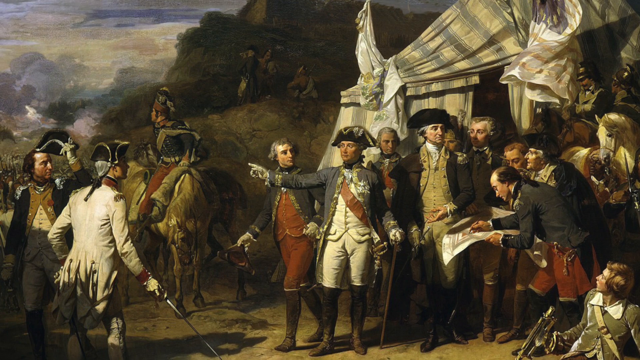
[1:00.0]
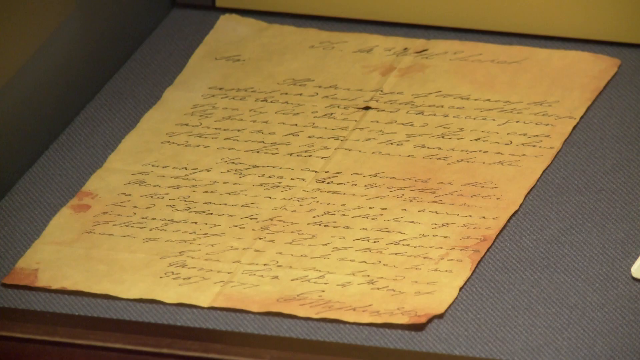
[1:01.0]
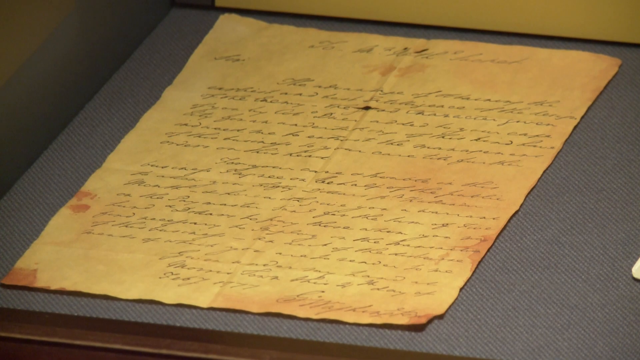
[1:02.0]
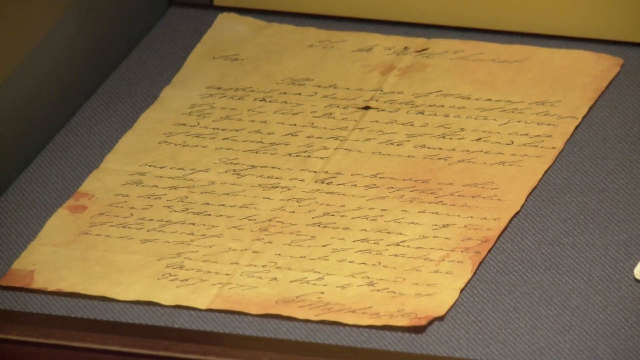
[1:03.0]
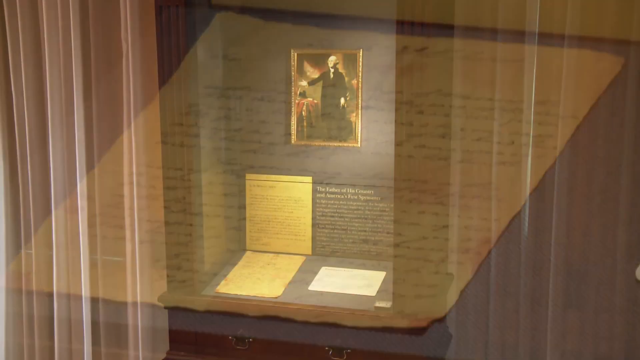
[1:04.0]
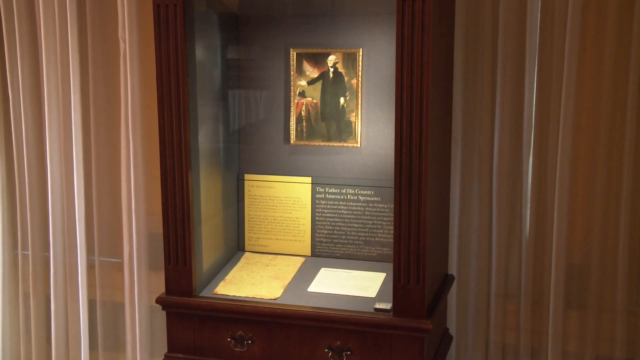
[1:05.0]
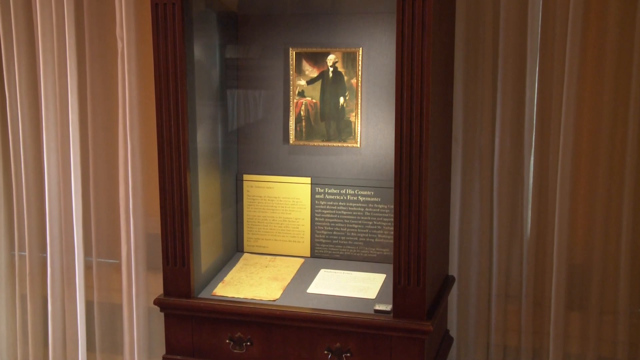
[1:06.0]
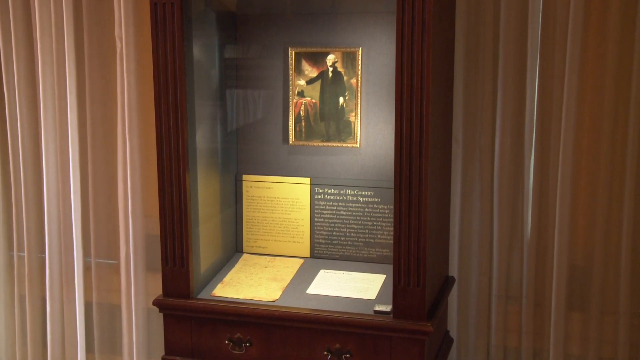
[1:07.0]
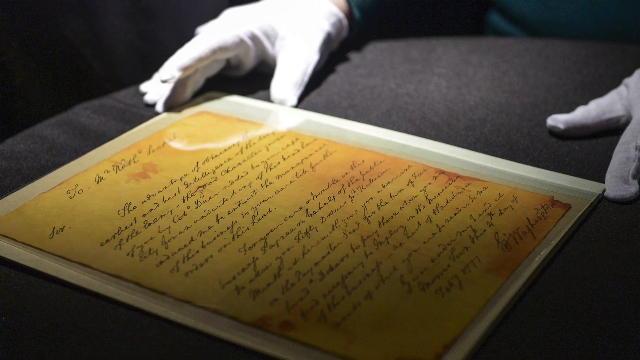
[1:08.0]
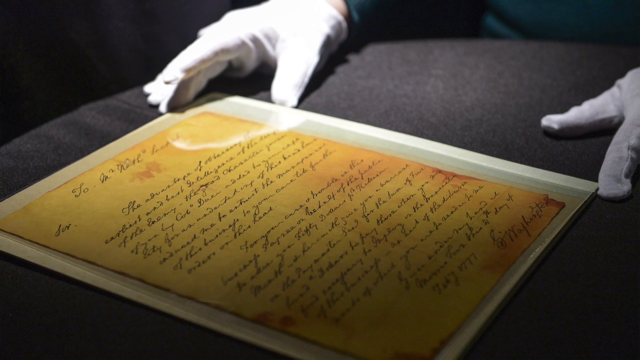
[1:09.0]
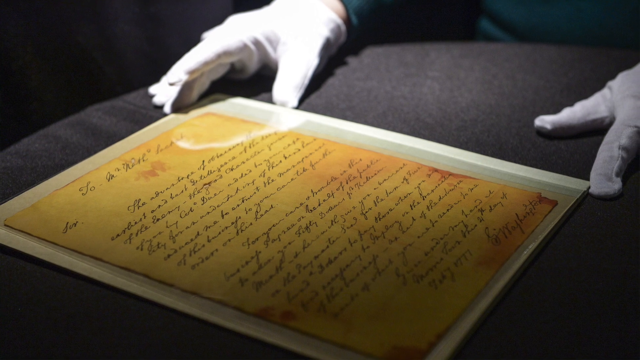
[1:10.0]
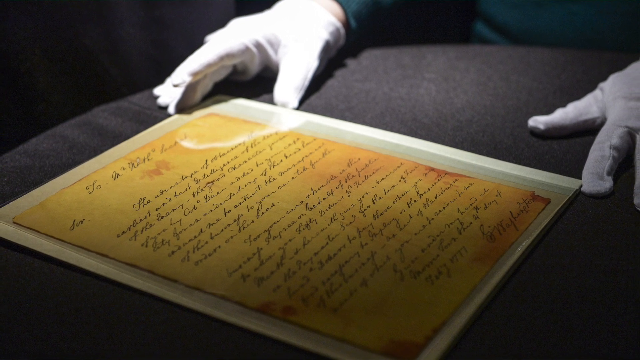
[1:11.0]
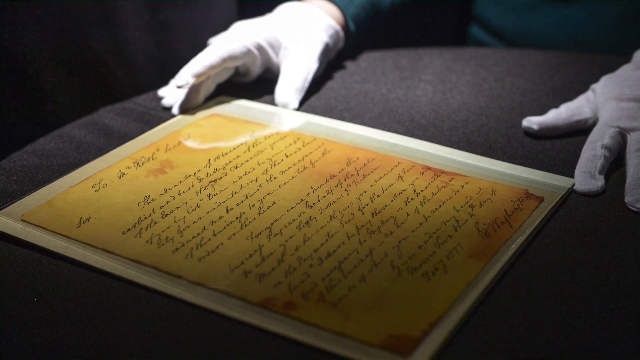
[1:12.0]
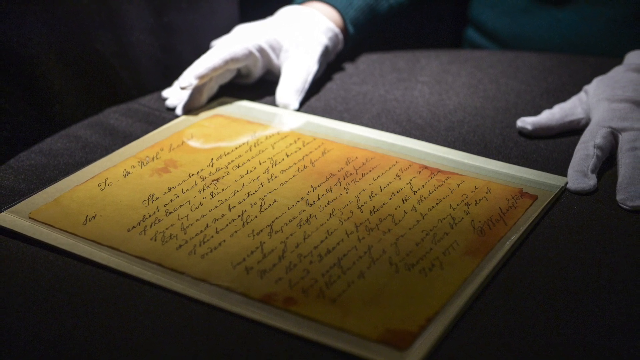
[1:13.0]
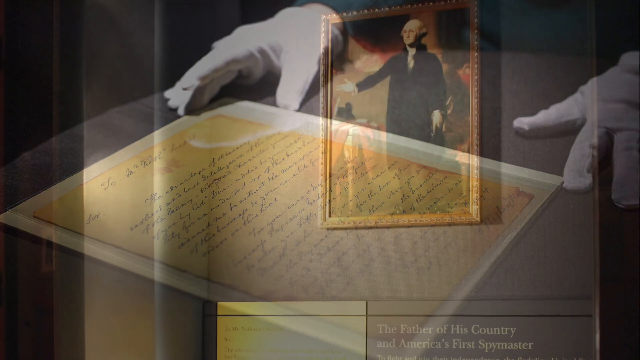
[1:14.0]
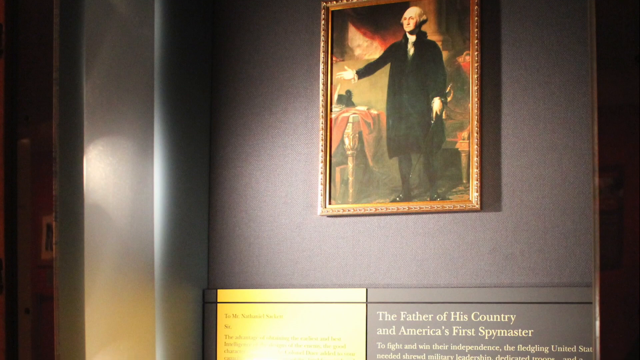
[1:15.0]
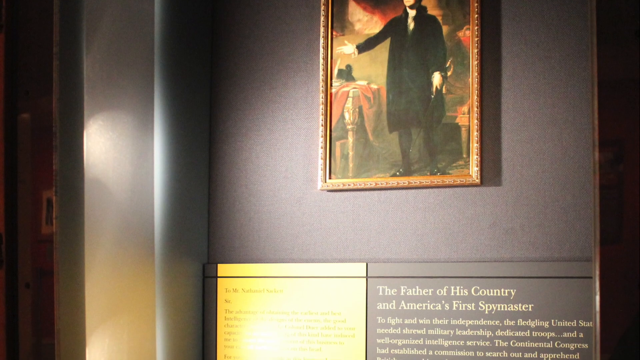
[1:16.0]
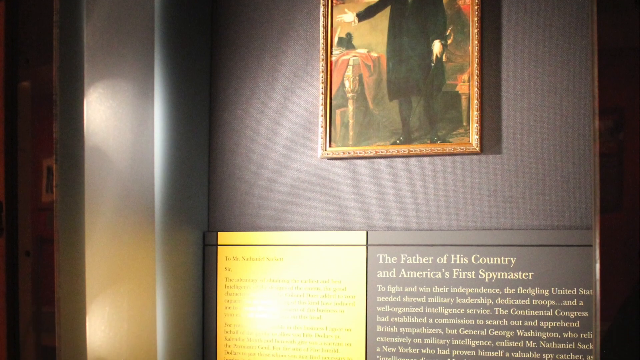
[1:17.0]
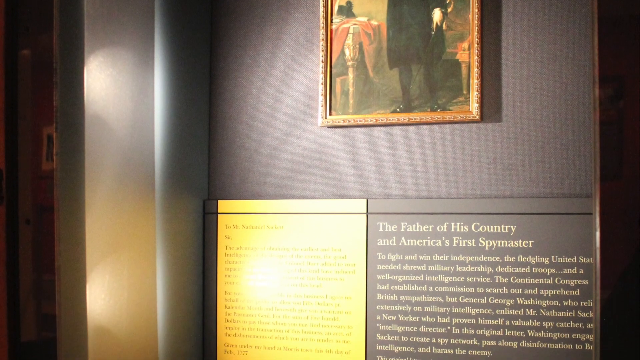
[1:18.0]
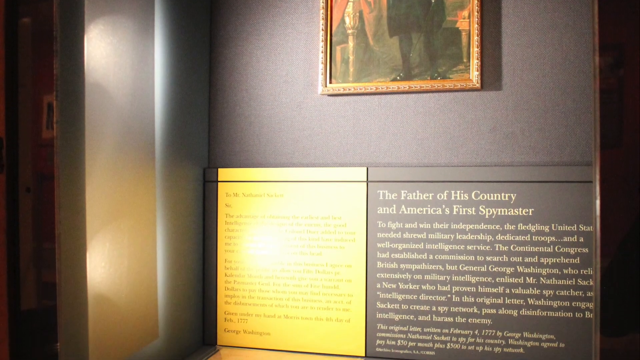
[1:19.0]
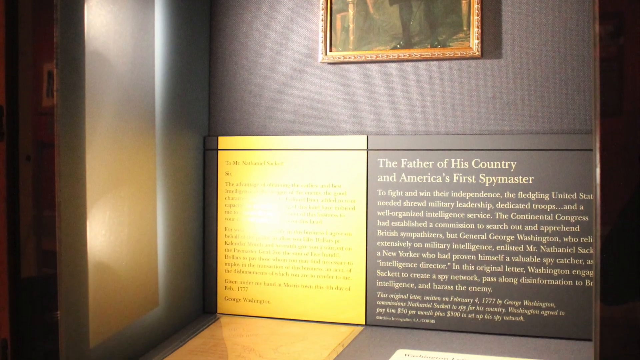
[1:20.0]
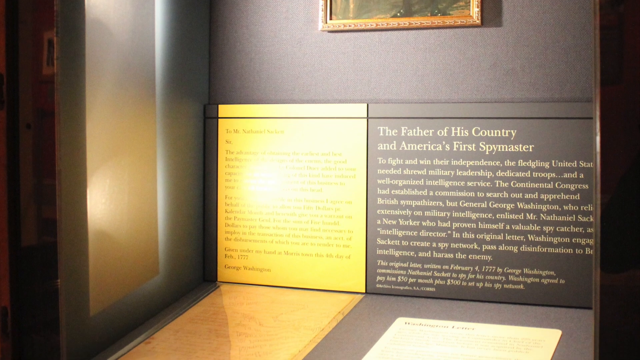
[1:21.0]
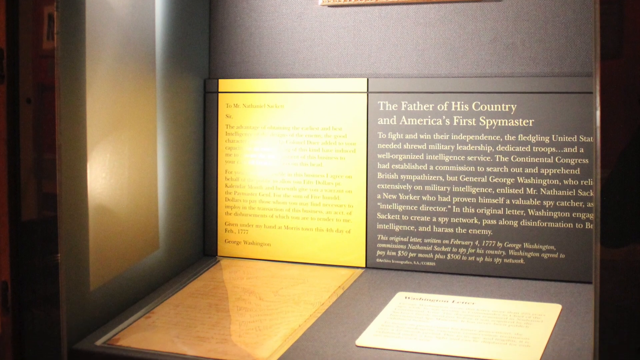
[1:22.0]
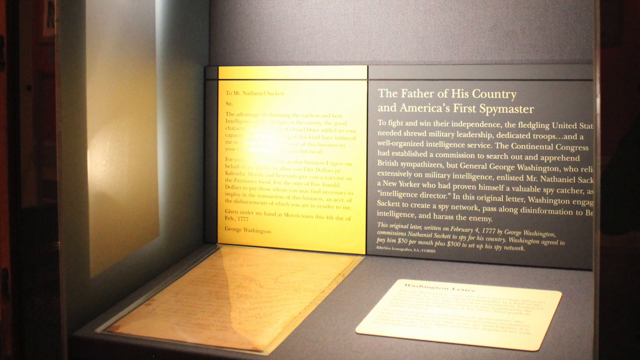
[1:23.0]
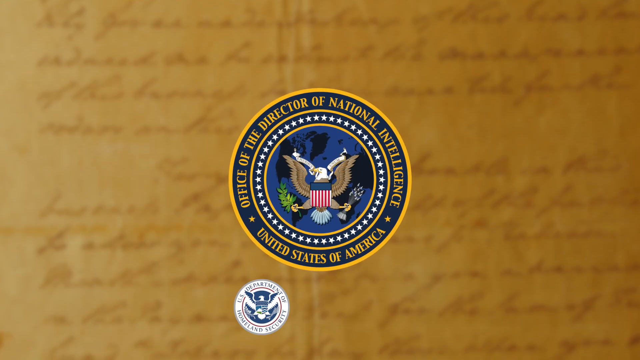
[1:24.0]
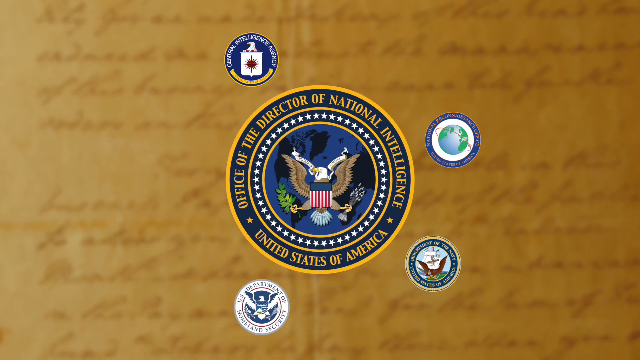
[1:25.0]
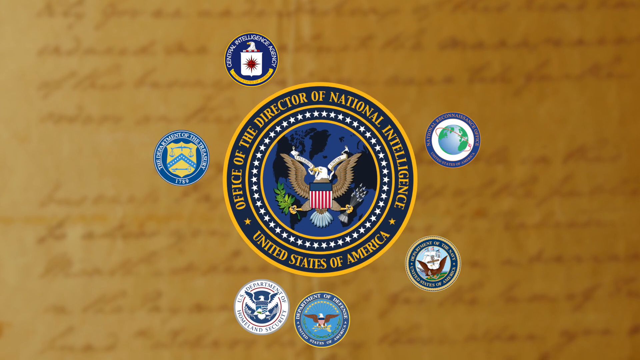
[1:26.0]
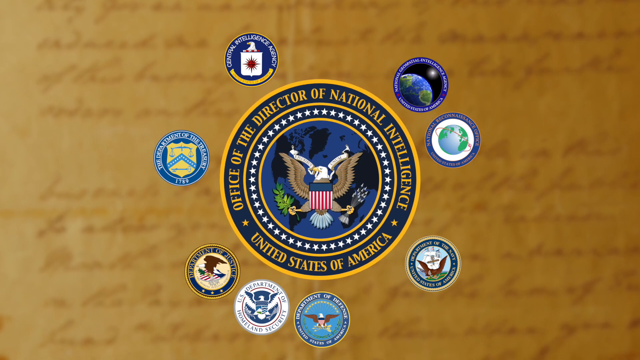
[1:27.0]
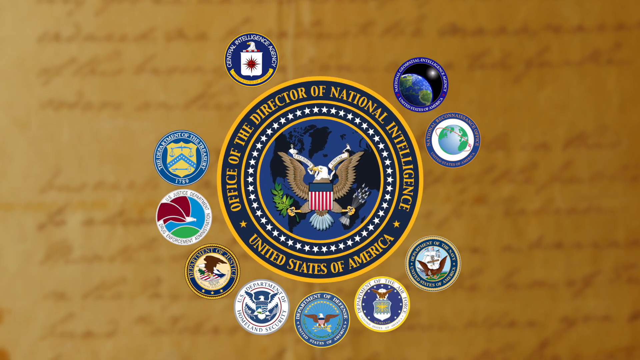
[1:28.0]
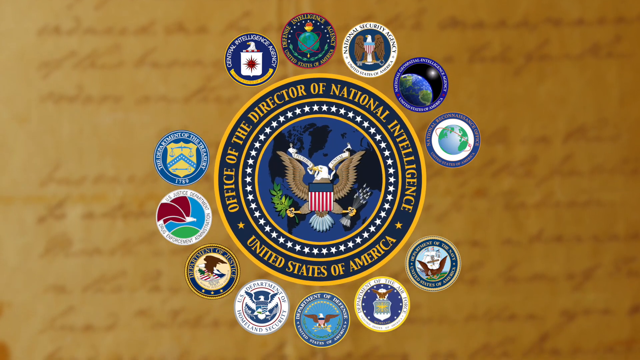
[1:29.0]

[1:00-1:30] A painting shows what seem to be officers and officials outside a blue and white striped tent. On the right, various officers seem to be looking at a large map and conversing. In the center, a man wearing a white undercoat, a blue overcoat and a black tricorn hat points with his white-gloved right hand towards the viewer's left. On the left there seem to be people taking orders from him; one is picking up his hat and motioning as if to acknowledge what the man in the center said. The video then cuts to a handwritten letter in a glass display case set onto a blue base. It zooms out, showing that the case is part of a larger display with a painting of George Washington above it and a placard explaining what the letter is. The display case is set into a large cherry oak wood cabinet set against a curtain wall. The video cuts to someone wearing white cloth gloves who seems to be interacting with the letter. The letter is pressed between pieces of glass and placed on a round table with a black tablecloth.